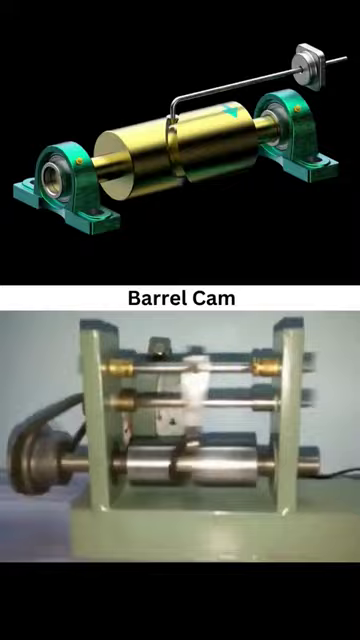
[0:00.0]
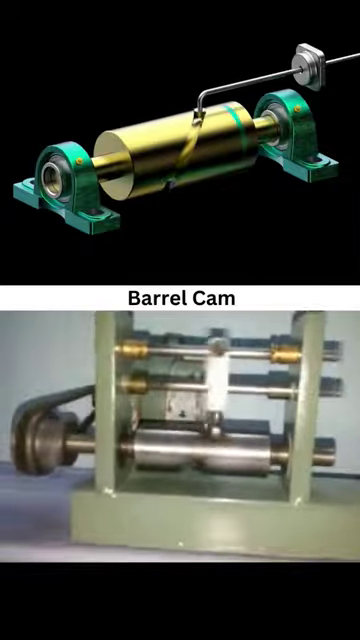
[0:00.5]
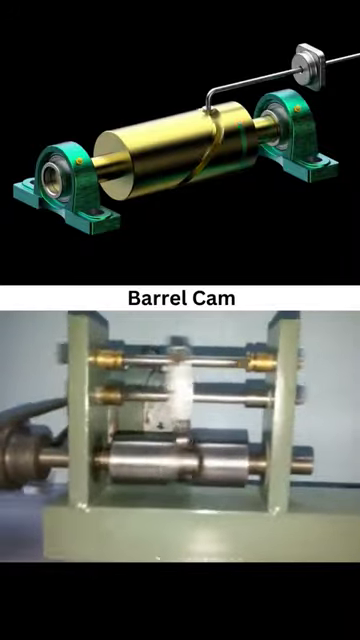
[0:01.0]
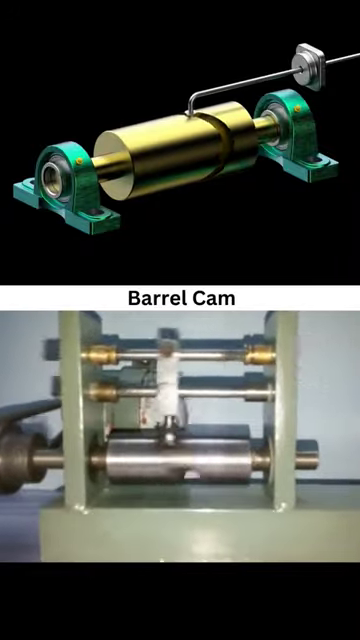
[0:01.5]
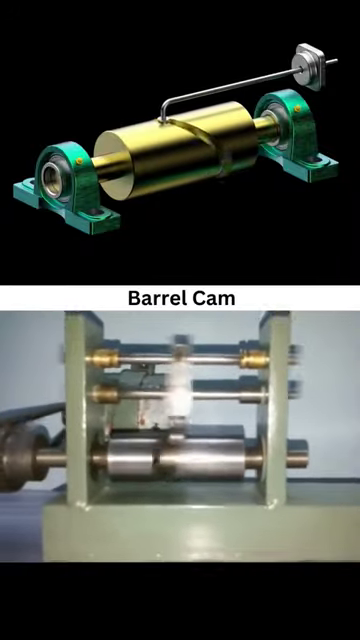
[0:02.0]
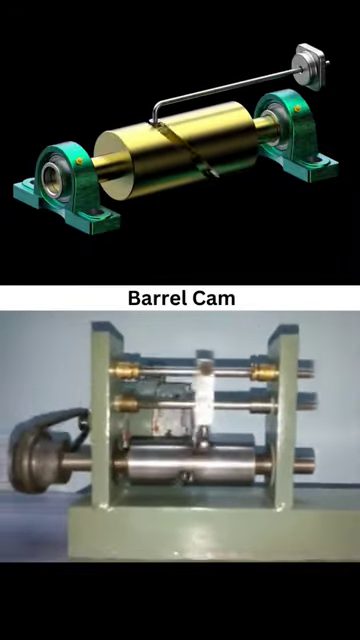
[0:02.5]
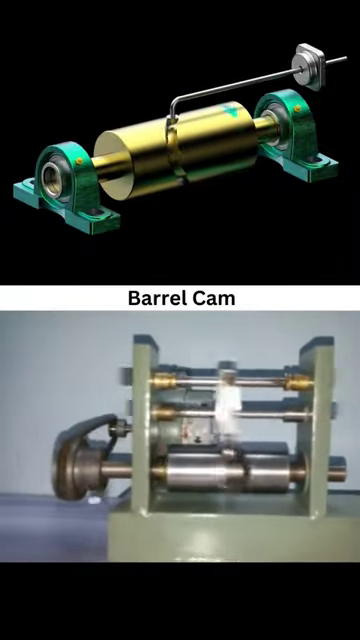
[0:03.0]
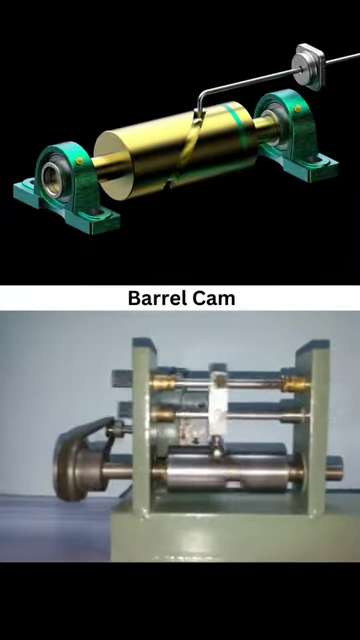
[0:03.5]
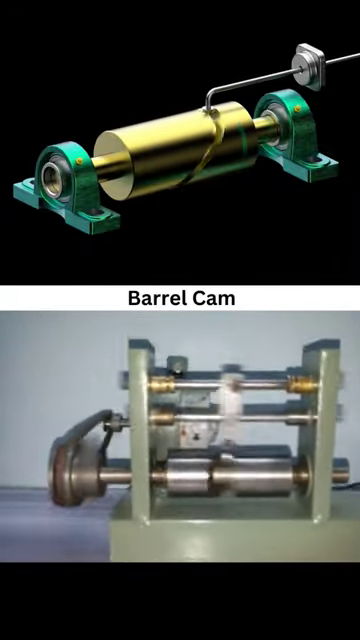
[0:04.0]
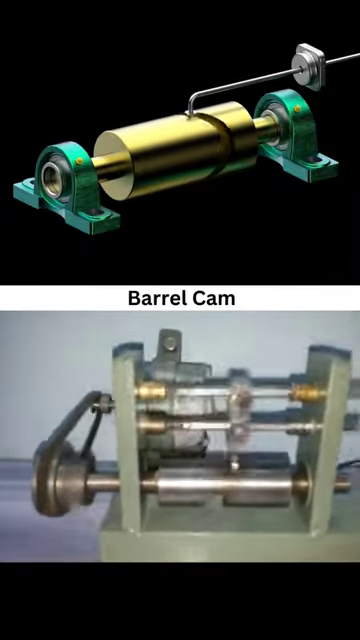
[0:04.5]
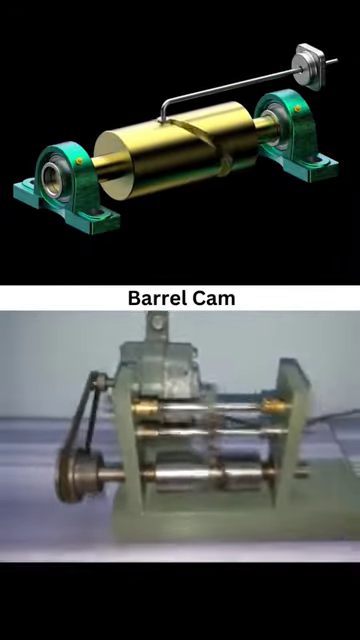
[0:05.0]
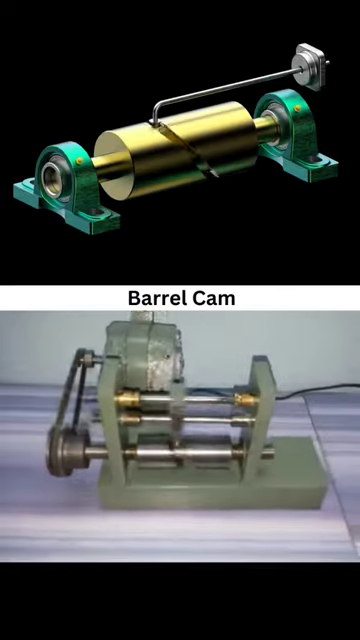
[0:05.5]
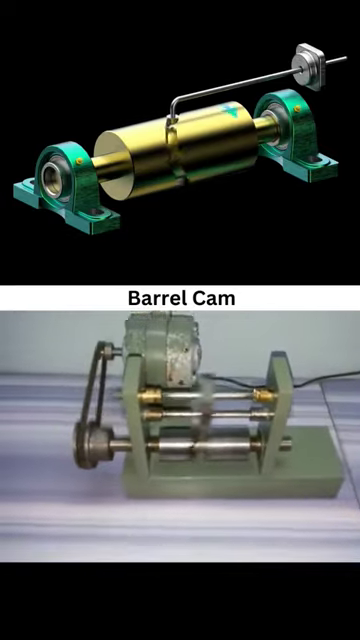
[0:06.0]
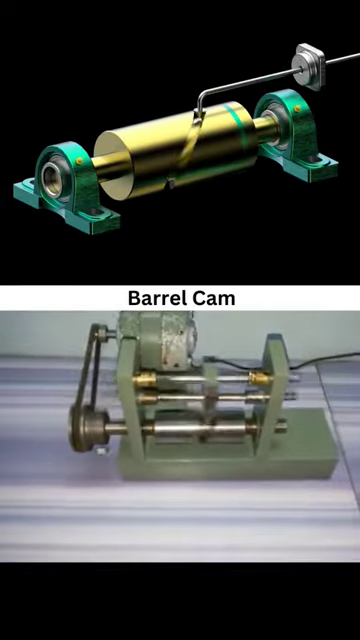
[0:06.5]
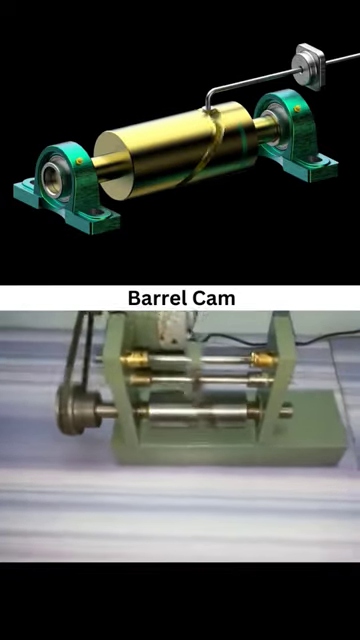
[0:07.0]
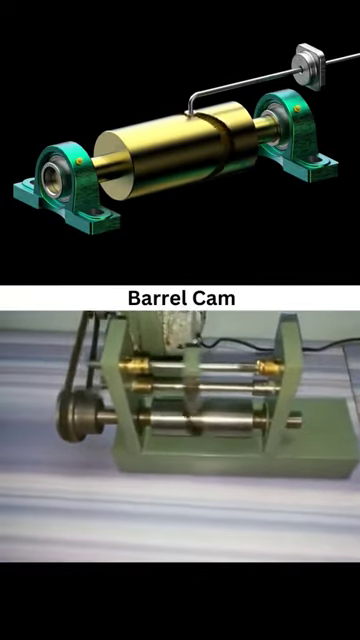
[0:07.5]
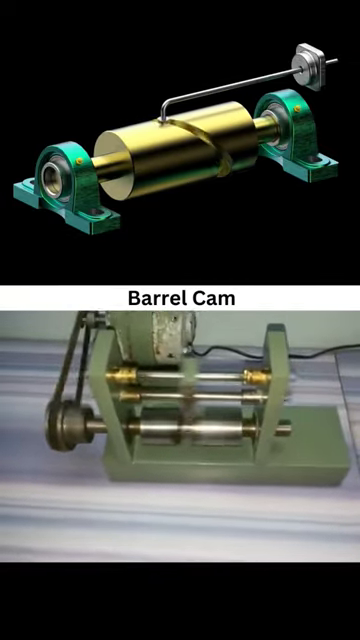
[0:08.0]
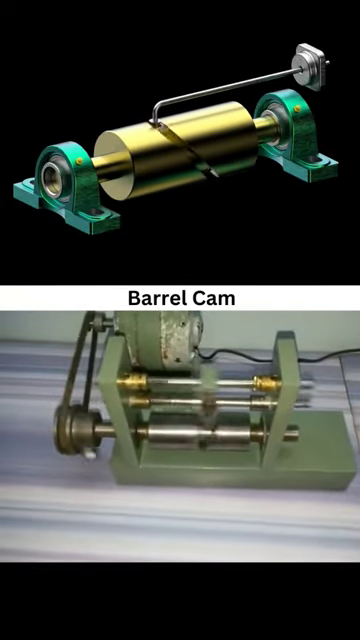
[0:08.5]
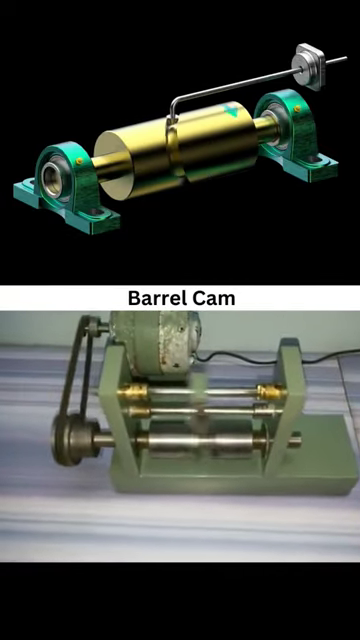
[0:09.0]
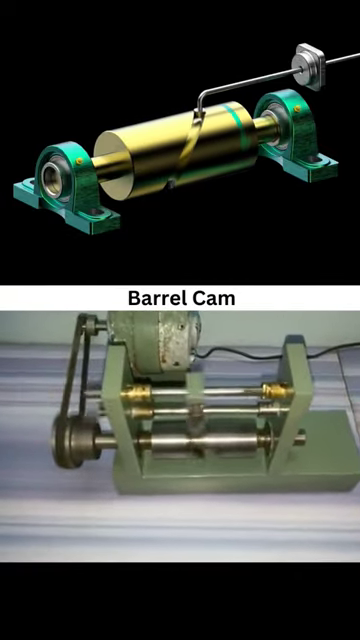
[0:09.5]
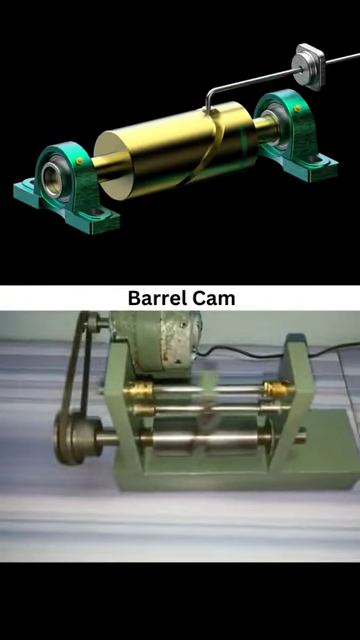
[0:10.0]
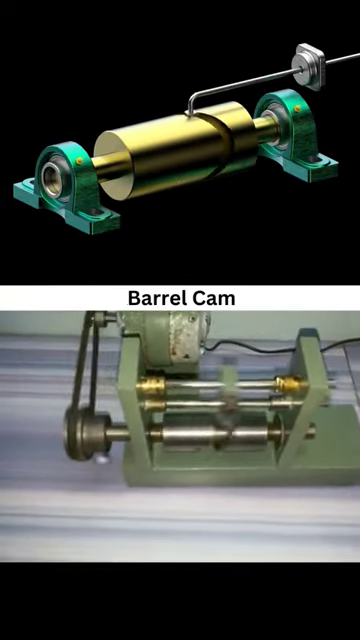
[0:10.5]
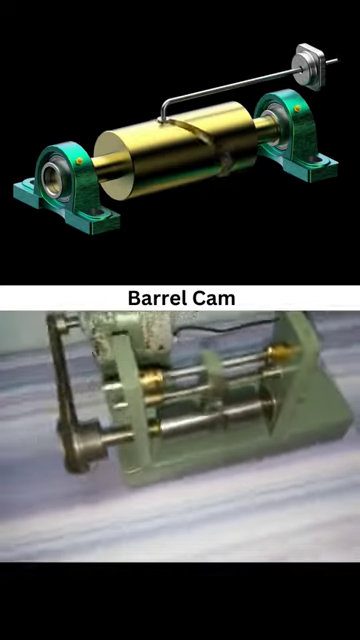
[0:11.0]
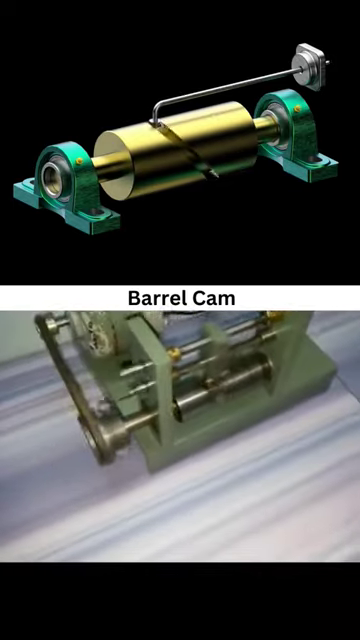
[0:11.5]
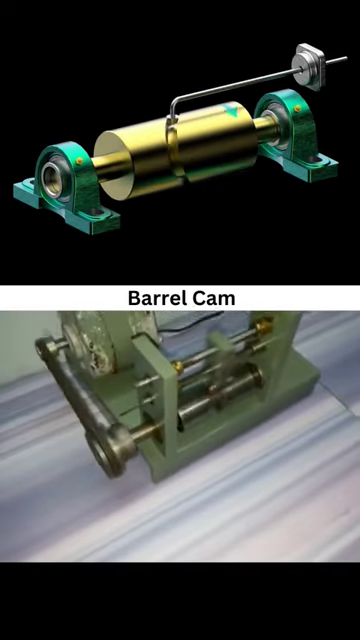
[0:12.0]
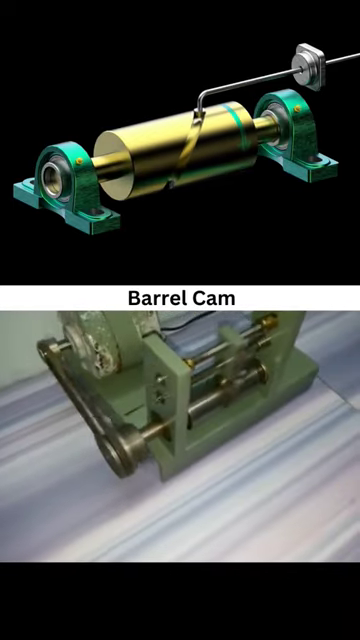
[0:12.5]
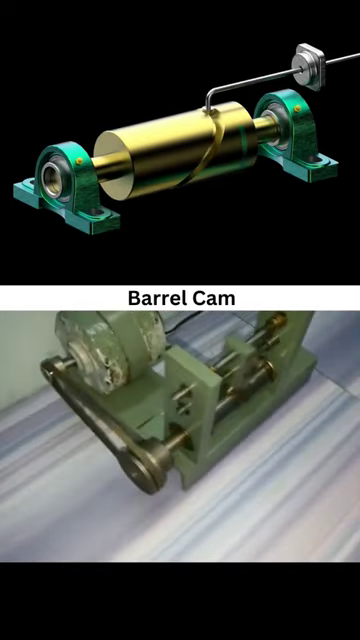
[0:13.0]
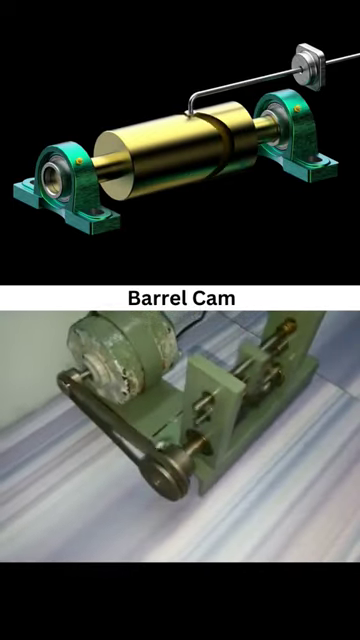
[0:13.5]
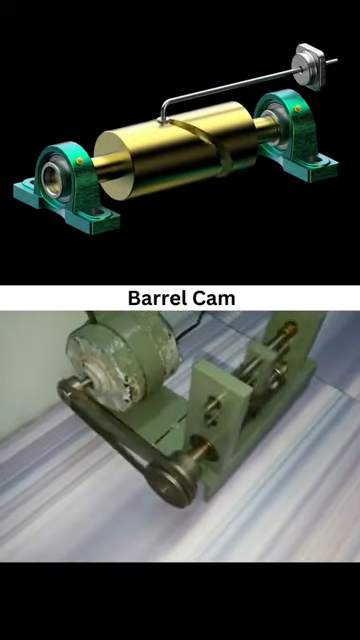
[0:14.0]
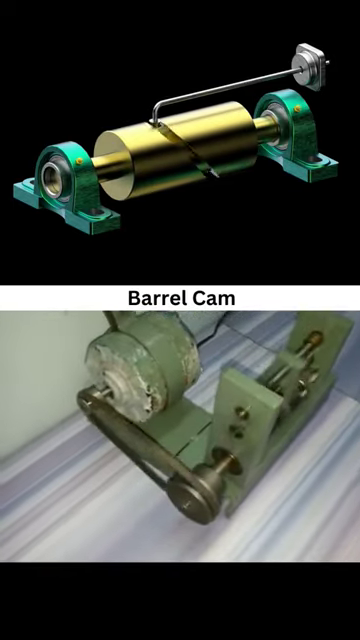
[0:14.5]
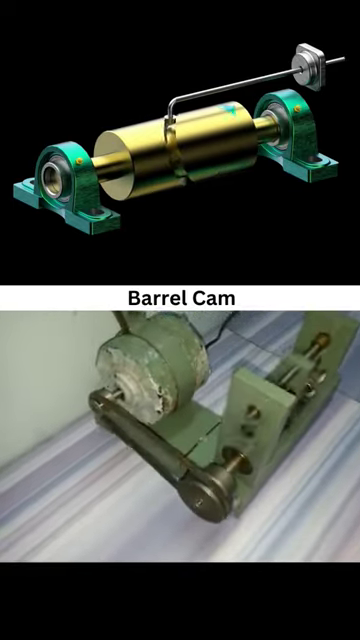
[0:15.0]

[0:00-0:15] Two different views illustrate how a barrel cam works. In the top part of the frame, something appears to move back and forth, engraving into a cylinder; this view is slowed down and is more of a characterized image, so the machine's action can be seen. The bottom part shows the engraving into the cylinder in quicker motion, as it actually looks when in use and how quickly the engraving occurs. It looks almost as if a hard metal is being pushed into another type of hard metal, and the equipment appears to be some sort of machinery.